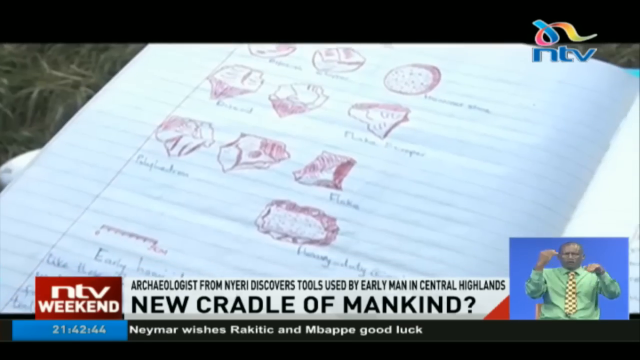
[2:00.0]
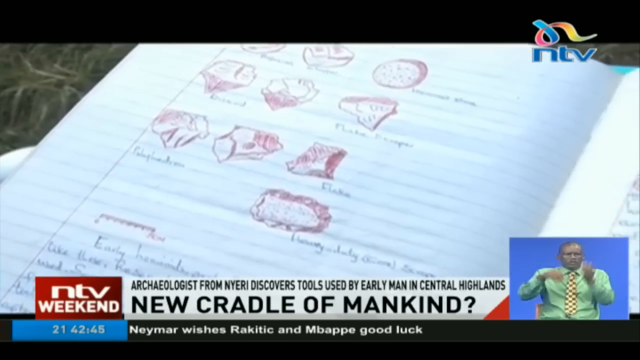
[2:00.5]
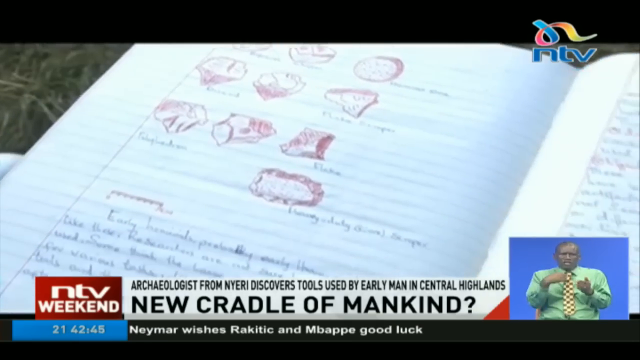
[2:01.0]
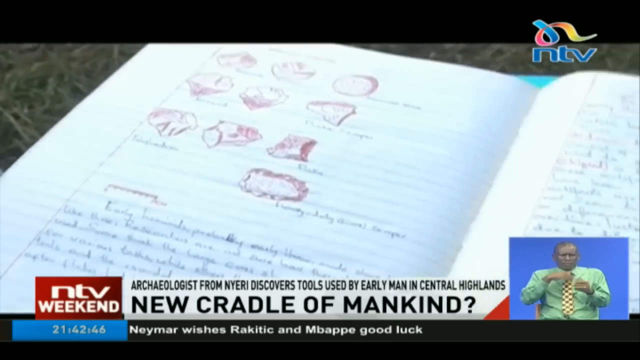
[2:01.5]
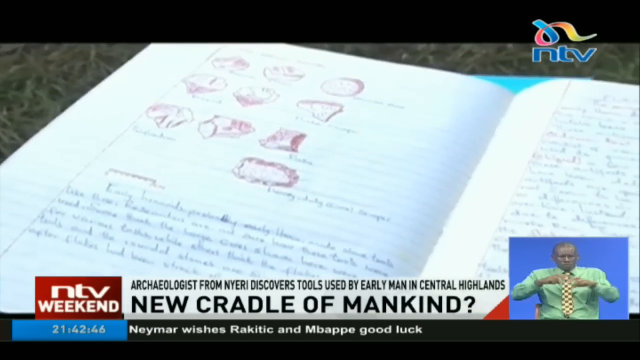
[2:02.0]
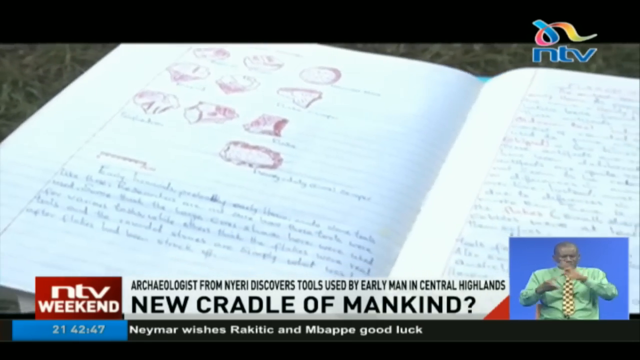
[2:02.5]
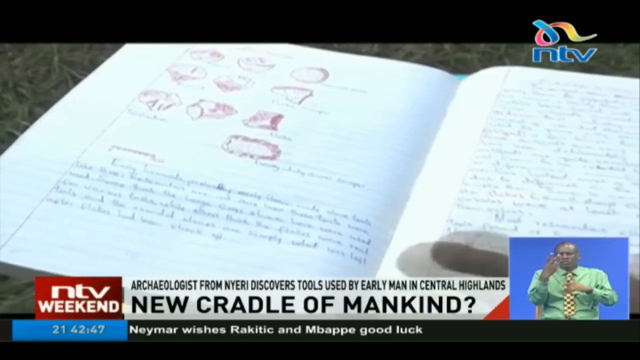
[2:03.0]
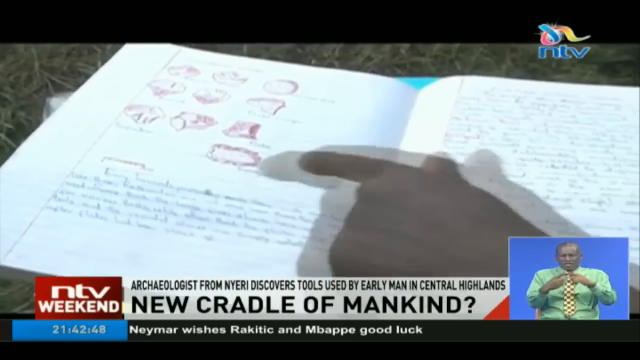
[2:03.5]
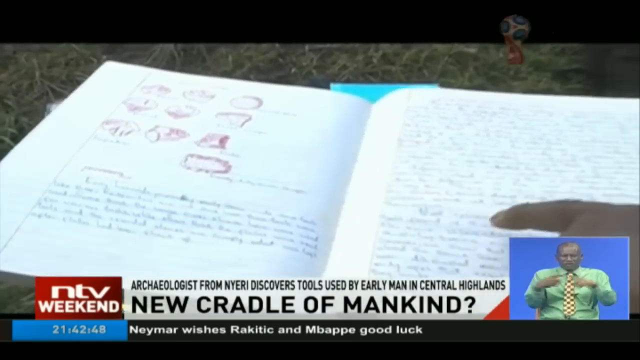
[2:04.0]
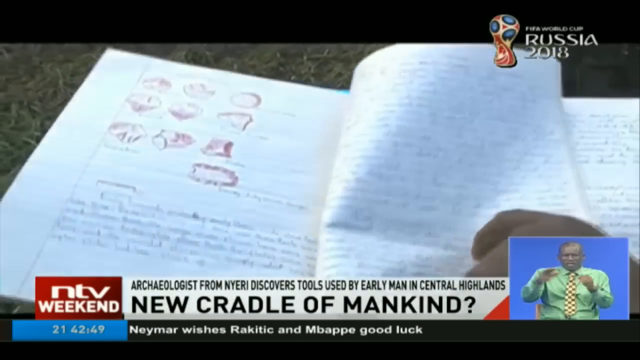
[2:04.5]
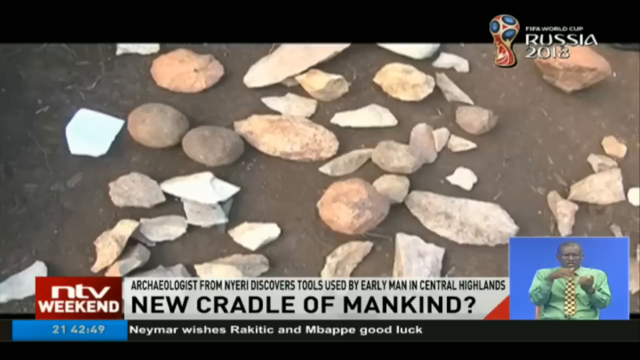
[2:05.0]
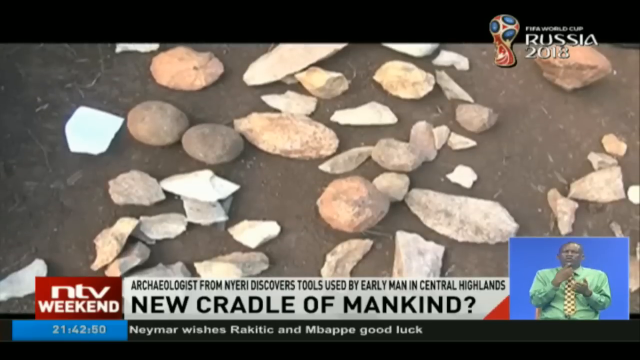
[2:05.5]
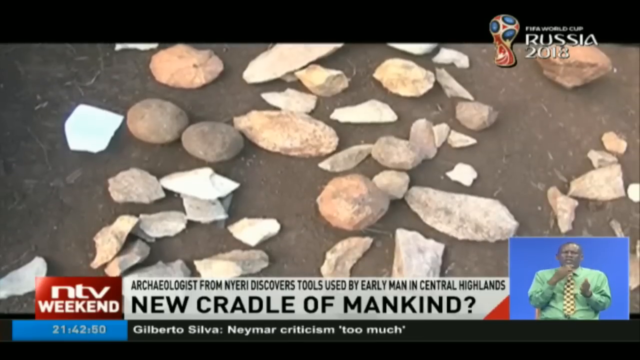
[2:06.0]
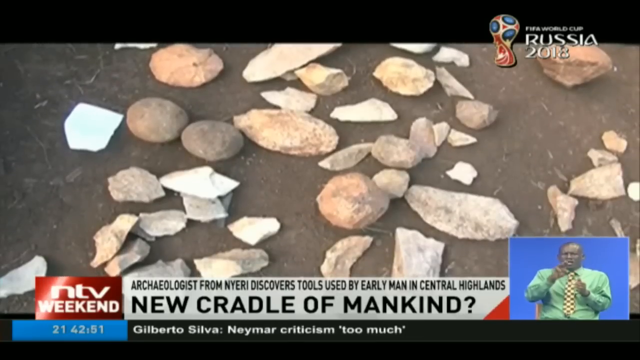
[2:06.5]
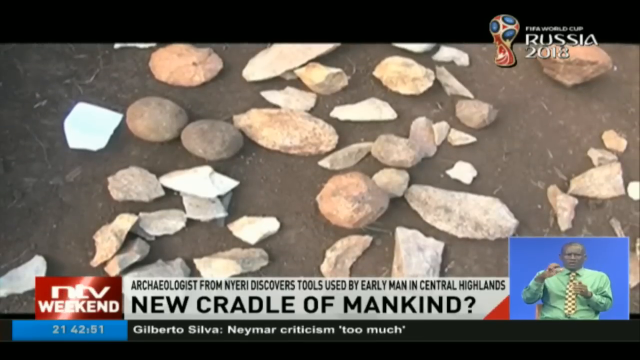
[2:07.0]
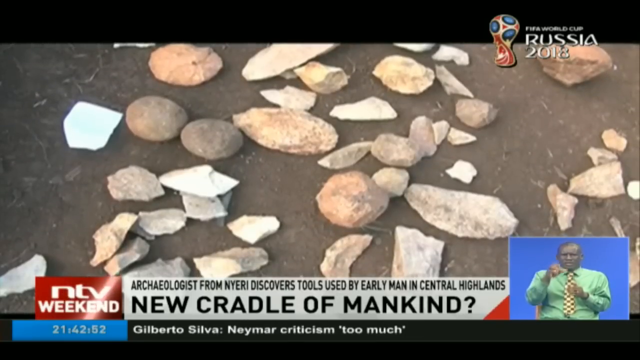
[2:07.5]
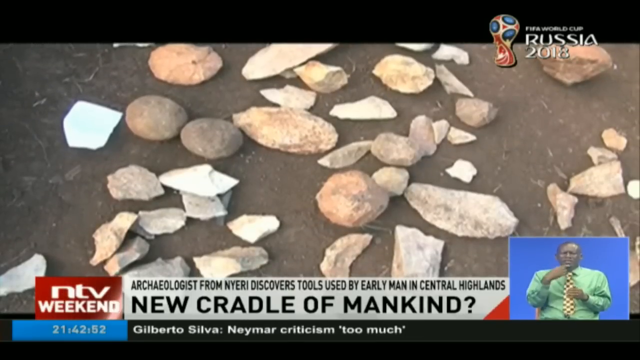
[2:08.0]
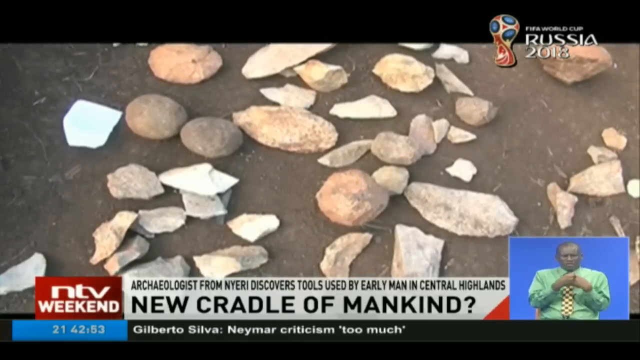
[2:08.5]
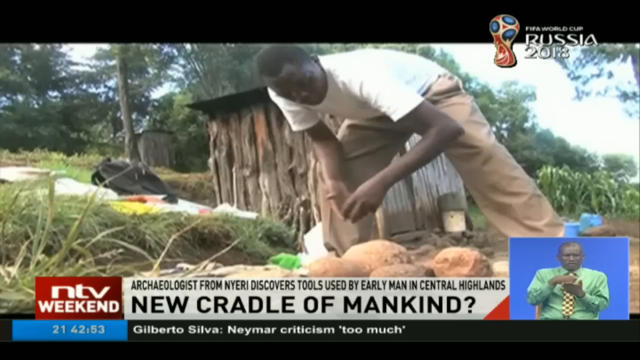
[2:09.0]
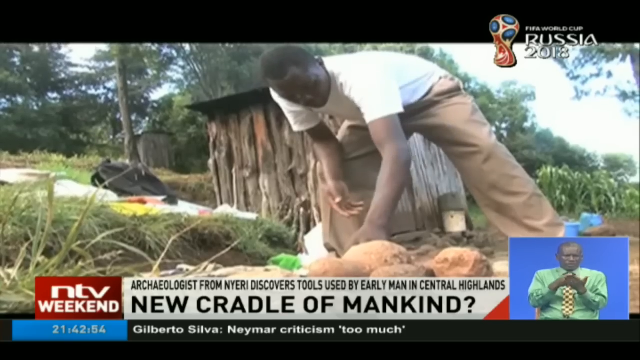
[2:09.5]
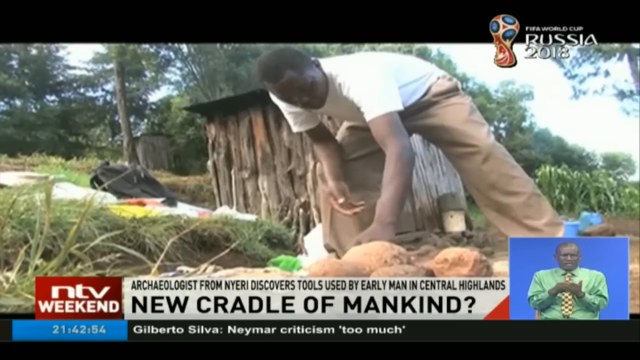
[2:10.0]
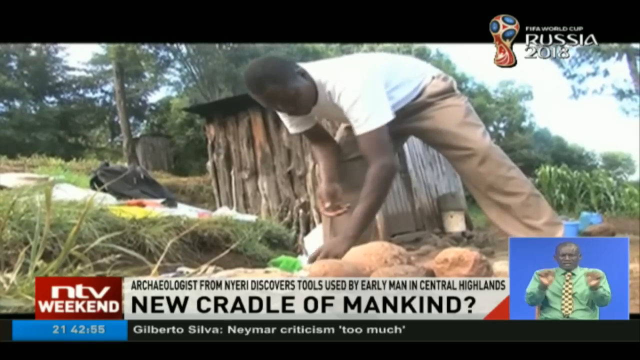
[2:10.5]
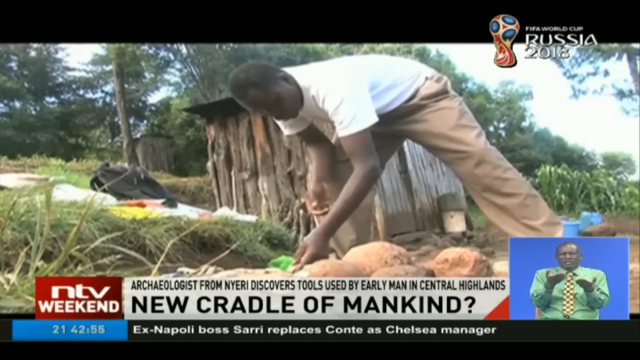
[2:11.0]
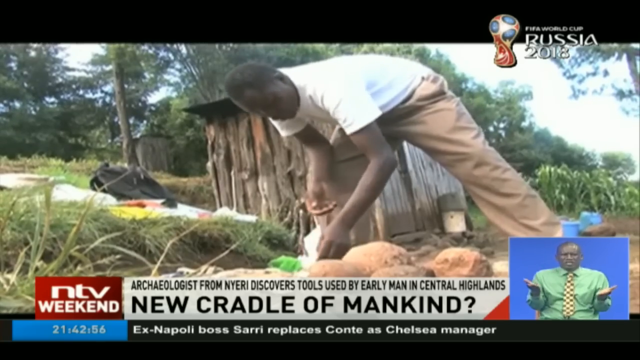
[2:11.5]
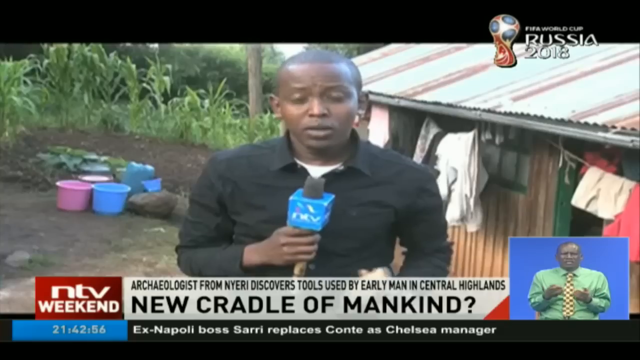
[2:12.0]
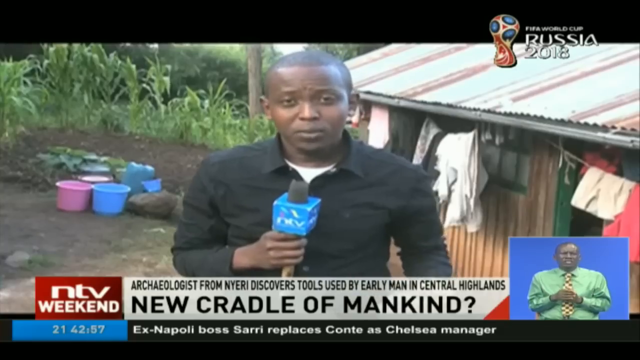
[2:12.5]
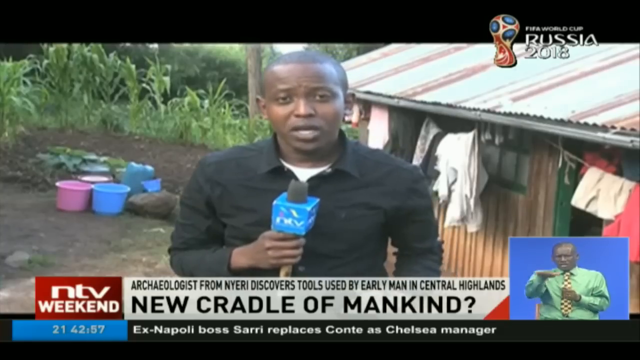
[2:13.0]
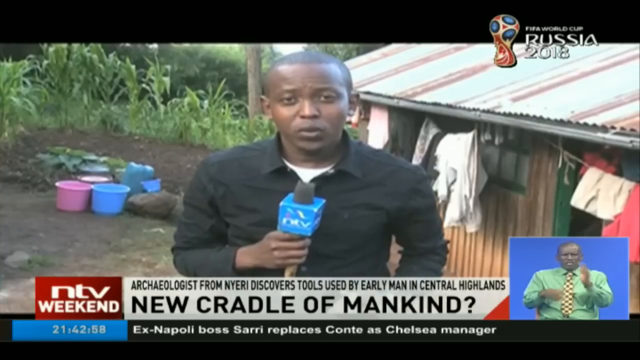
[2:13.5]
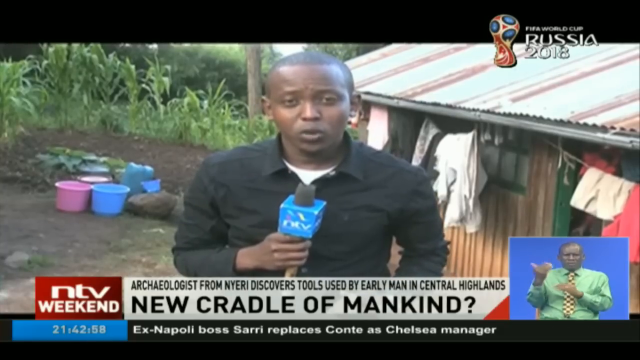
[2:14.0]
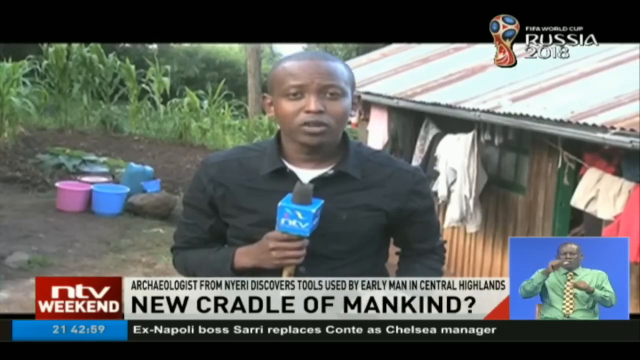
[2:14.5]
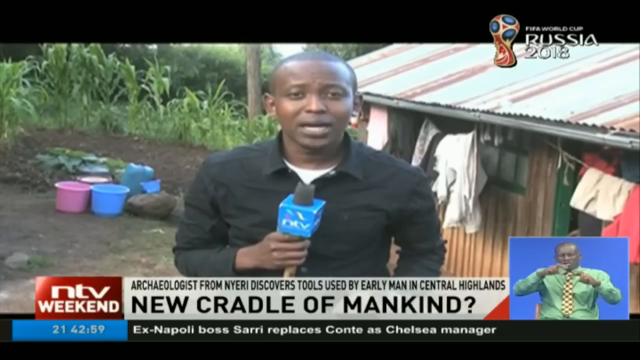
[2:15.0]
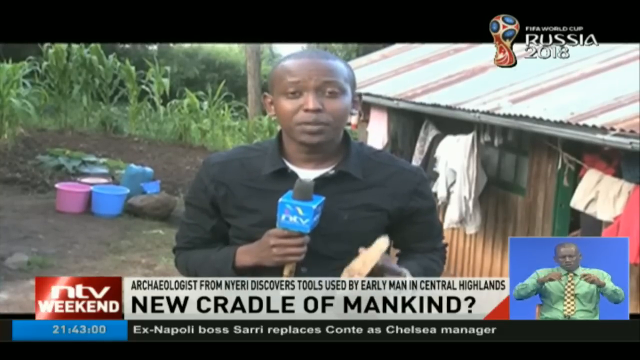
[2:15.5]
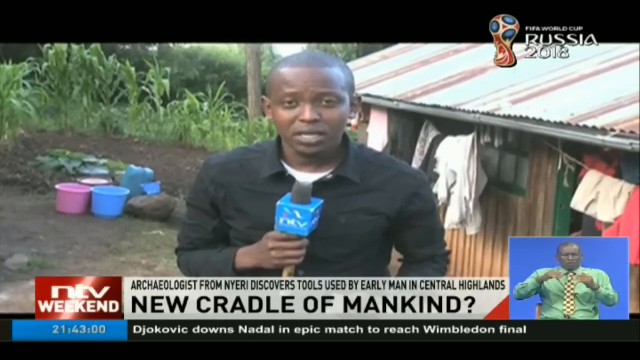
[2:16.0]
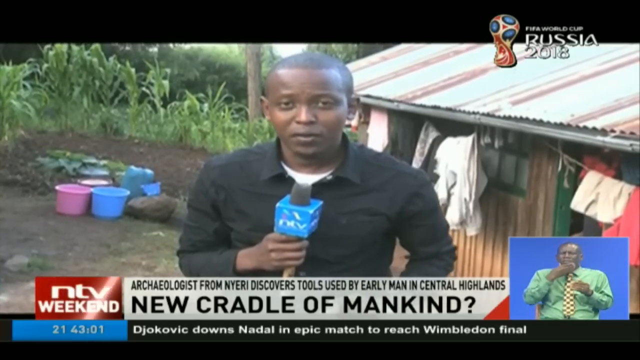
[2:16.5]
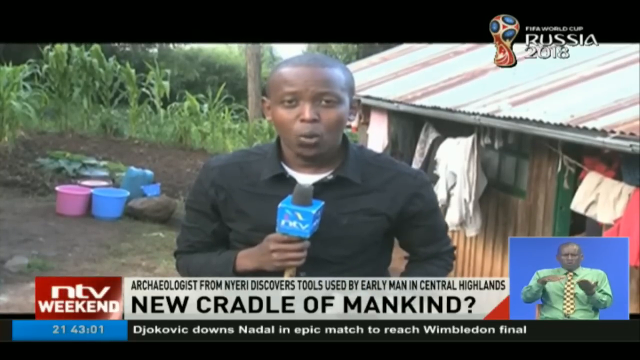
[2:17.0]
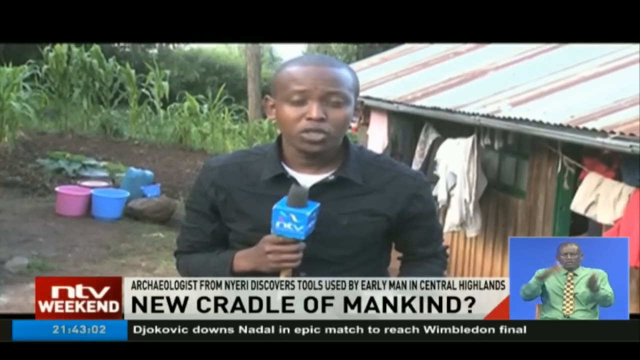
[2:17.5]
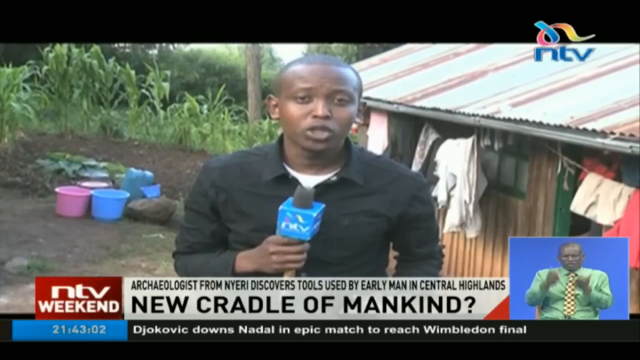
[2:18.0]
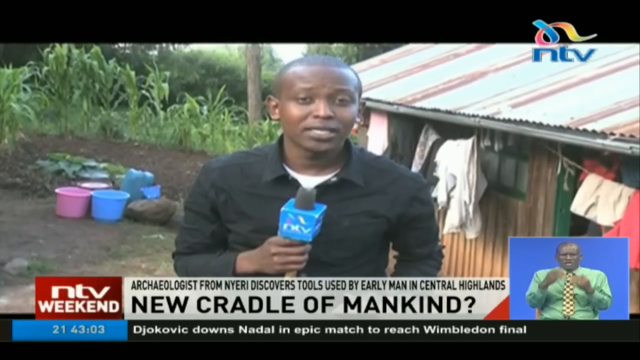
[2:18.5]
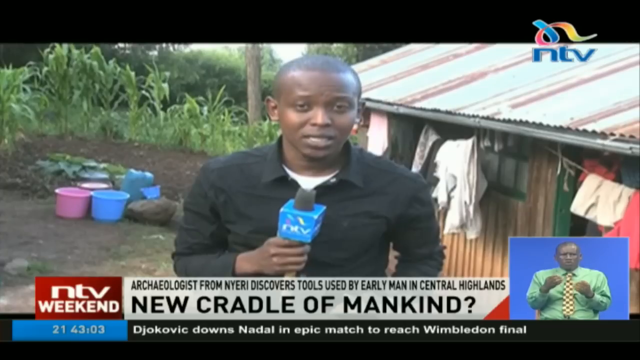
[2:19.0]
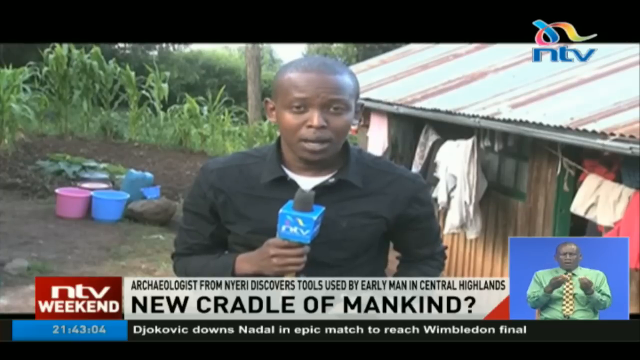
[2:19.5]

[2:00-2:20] The video is still about the tools from the cradle of mankind, from a long time ago, and about Africa.